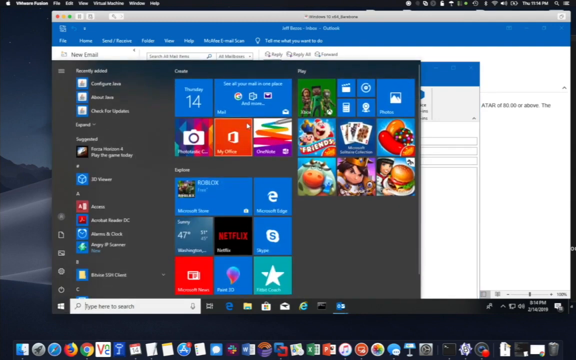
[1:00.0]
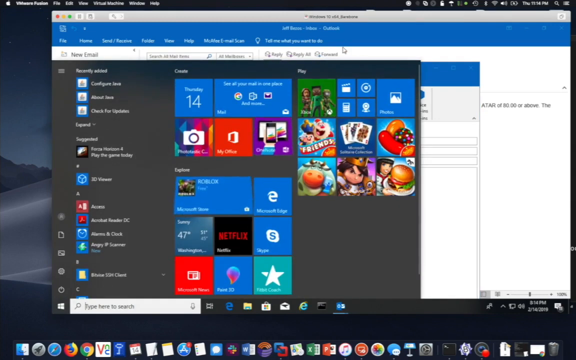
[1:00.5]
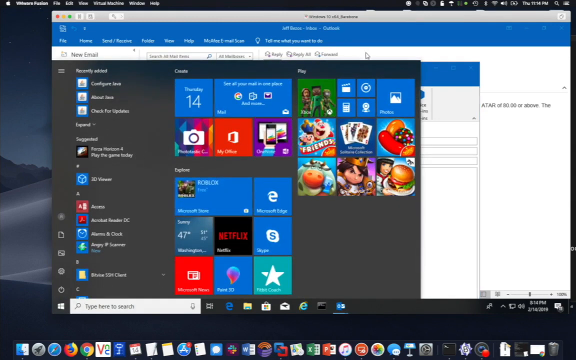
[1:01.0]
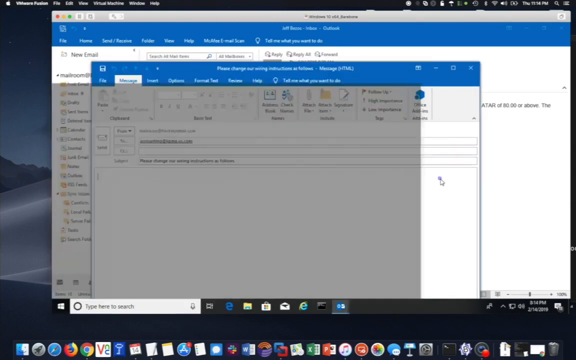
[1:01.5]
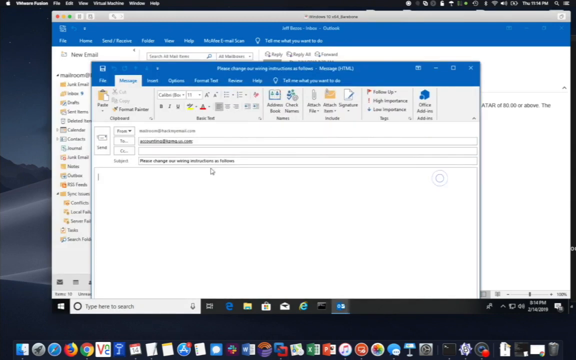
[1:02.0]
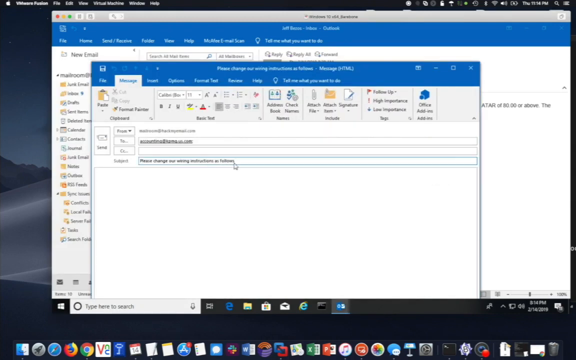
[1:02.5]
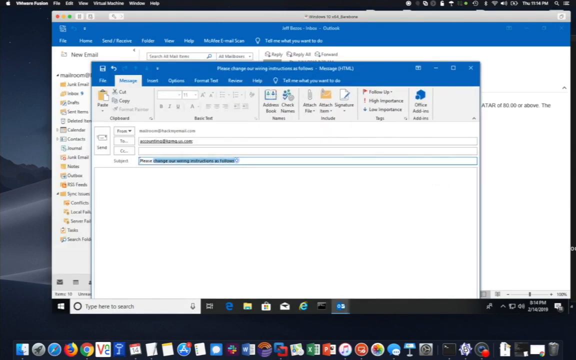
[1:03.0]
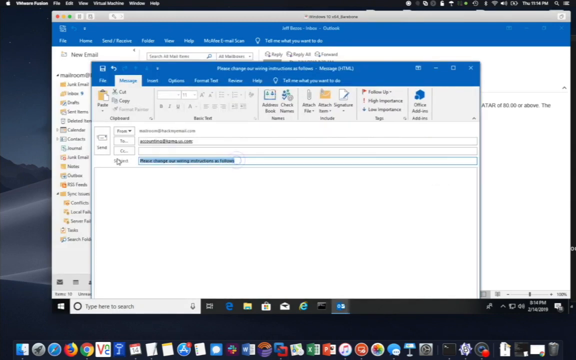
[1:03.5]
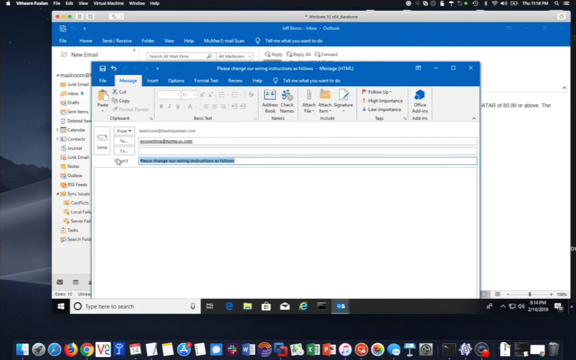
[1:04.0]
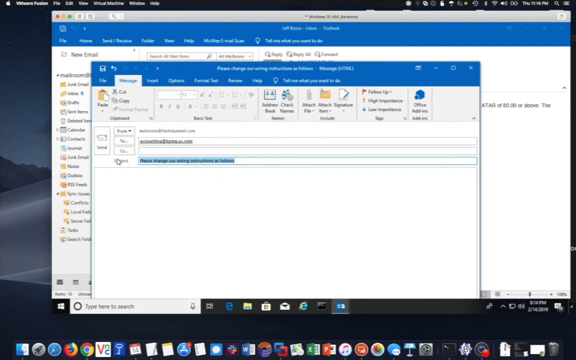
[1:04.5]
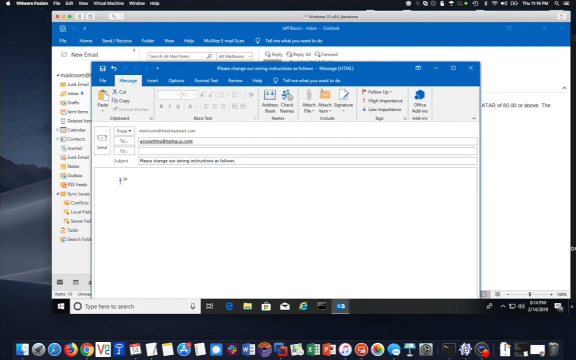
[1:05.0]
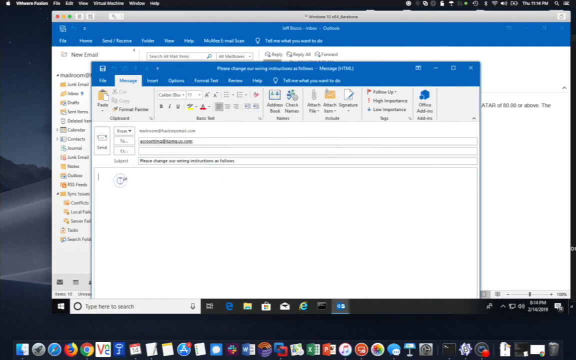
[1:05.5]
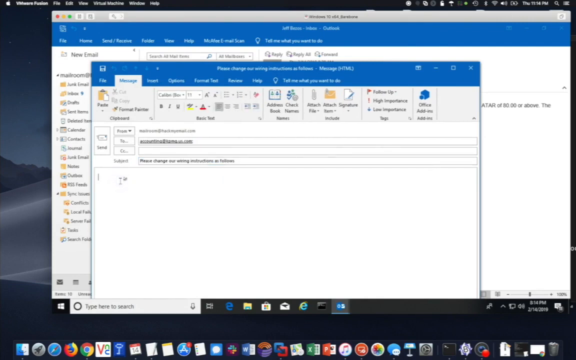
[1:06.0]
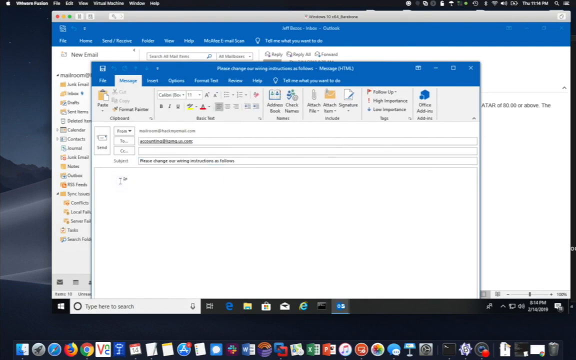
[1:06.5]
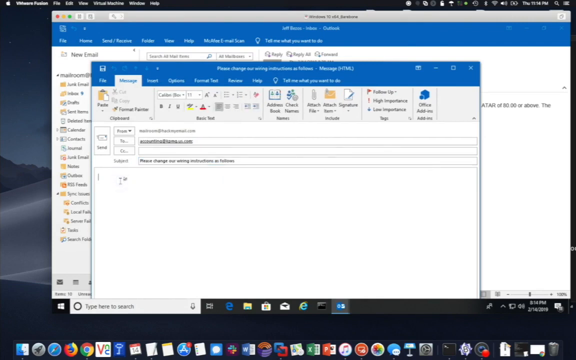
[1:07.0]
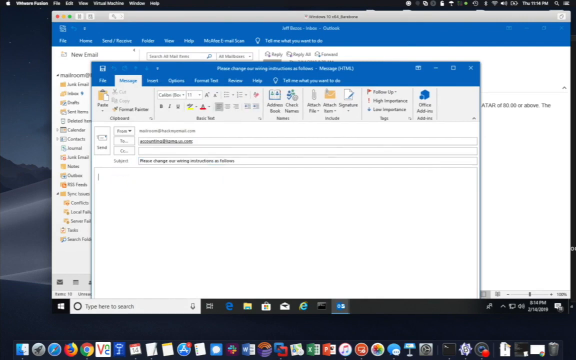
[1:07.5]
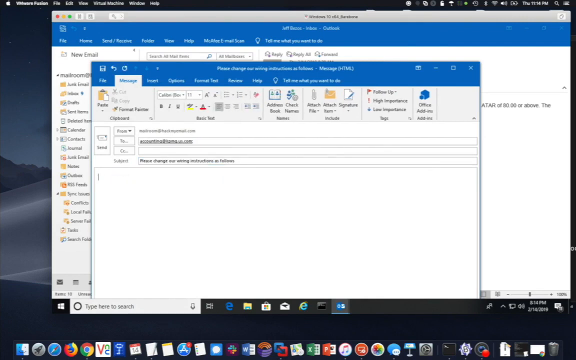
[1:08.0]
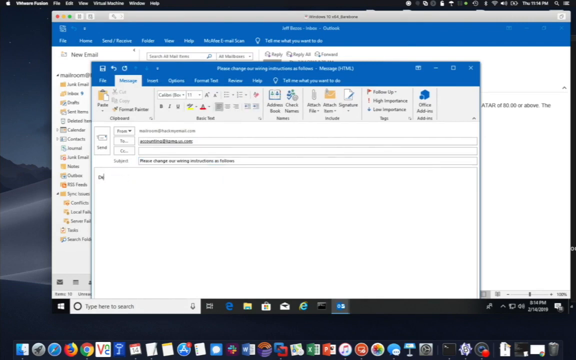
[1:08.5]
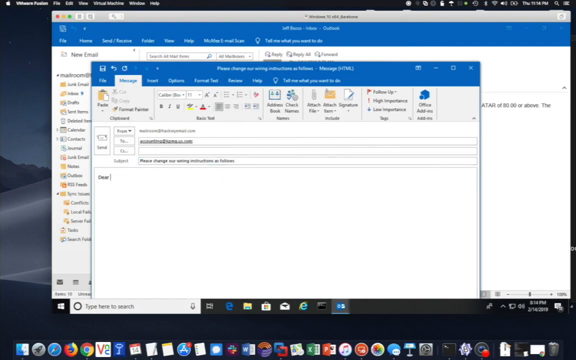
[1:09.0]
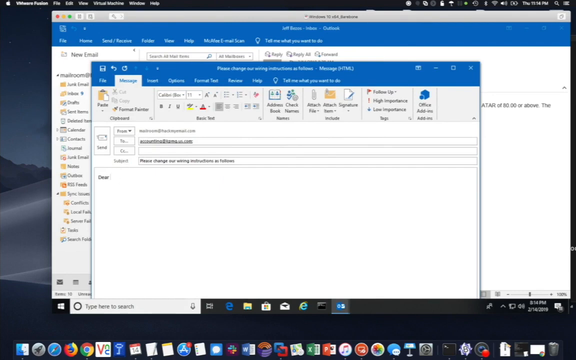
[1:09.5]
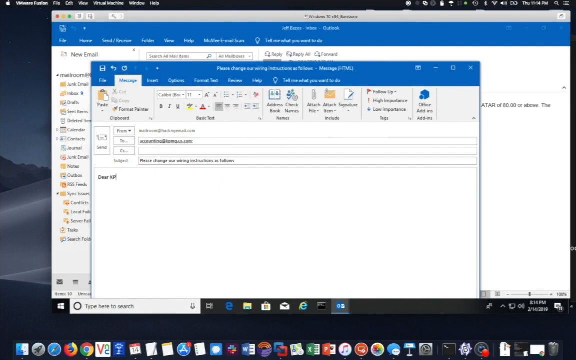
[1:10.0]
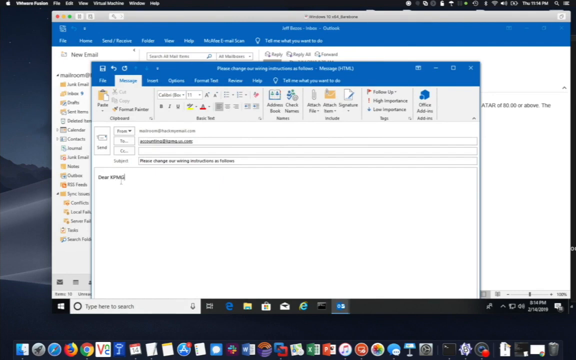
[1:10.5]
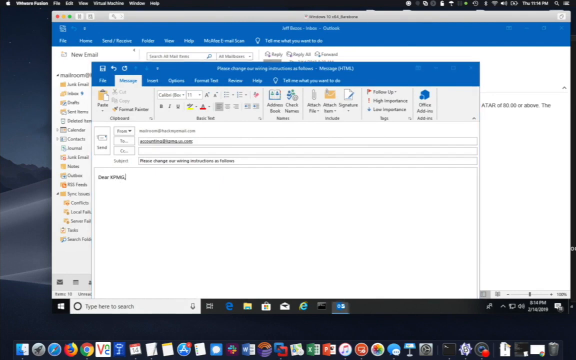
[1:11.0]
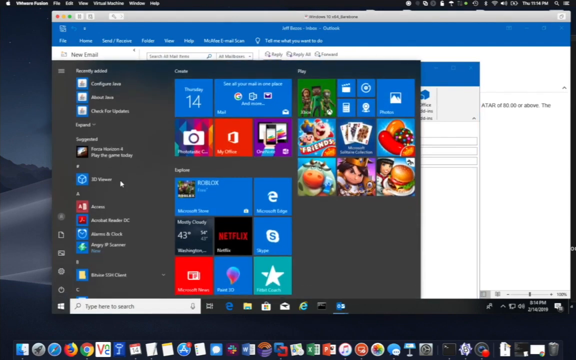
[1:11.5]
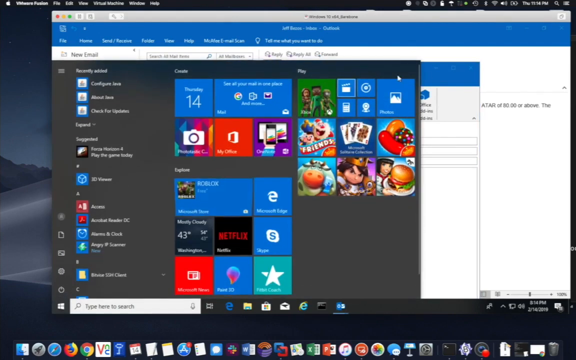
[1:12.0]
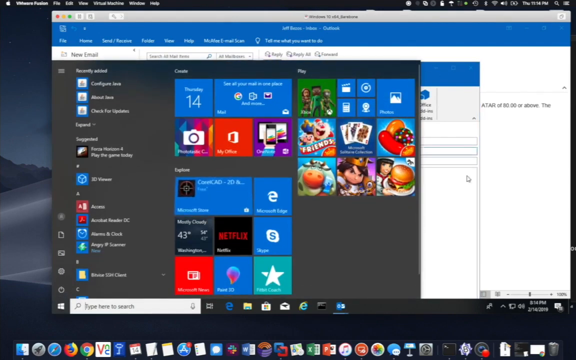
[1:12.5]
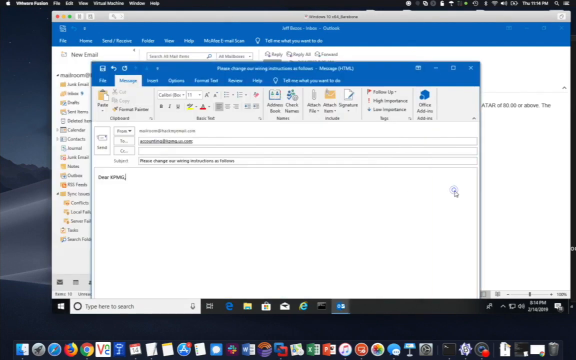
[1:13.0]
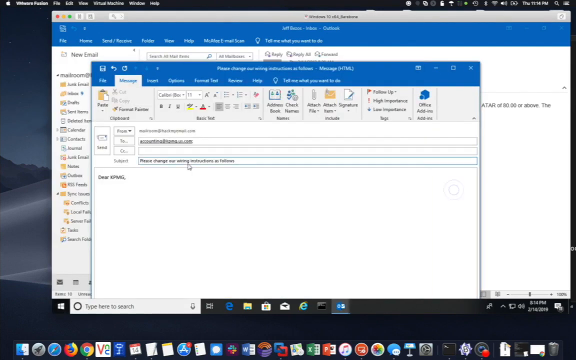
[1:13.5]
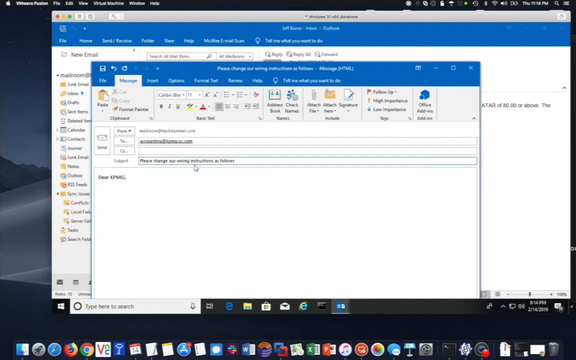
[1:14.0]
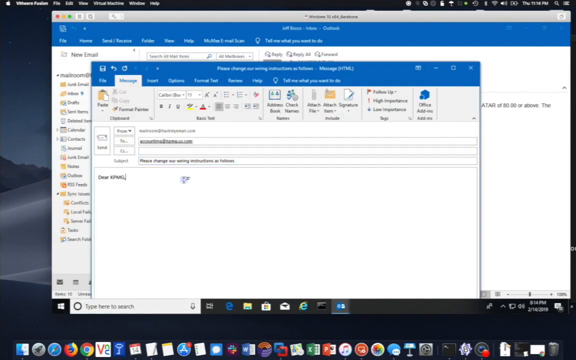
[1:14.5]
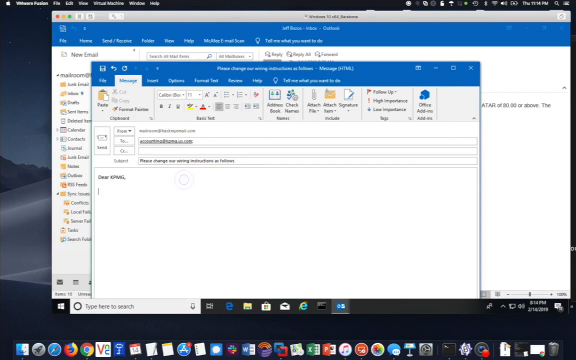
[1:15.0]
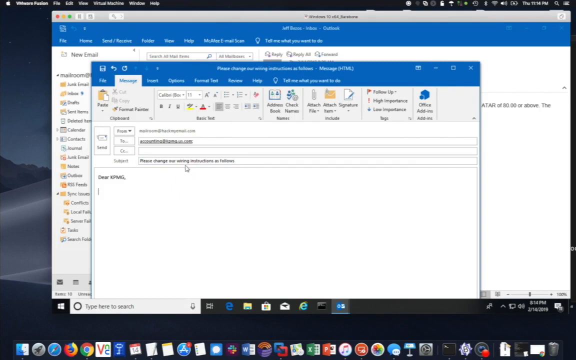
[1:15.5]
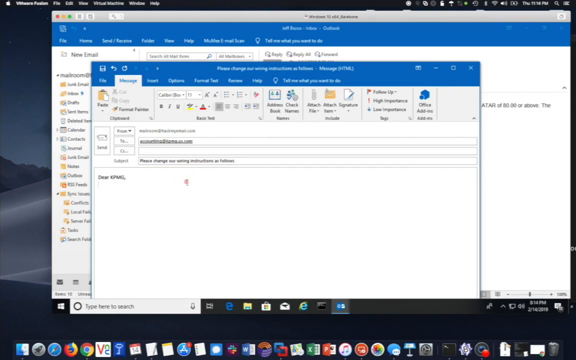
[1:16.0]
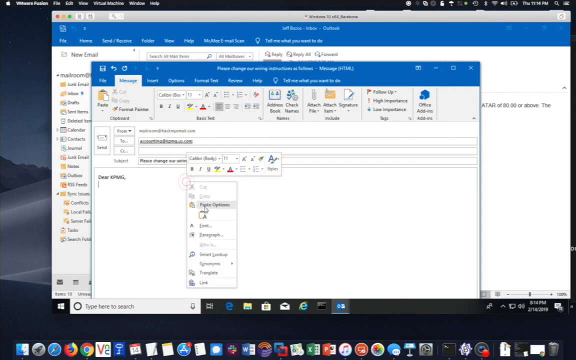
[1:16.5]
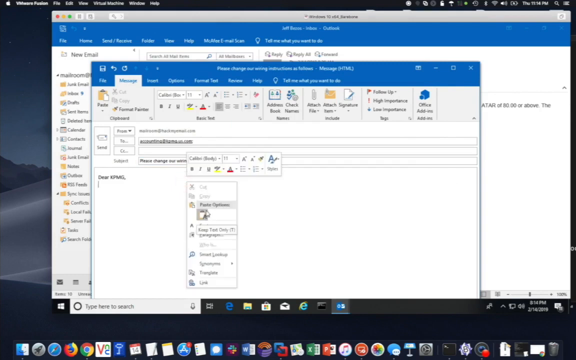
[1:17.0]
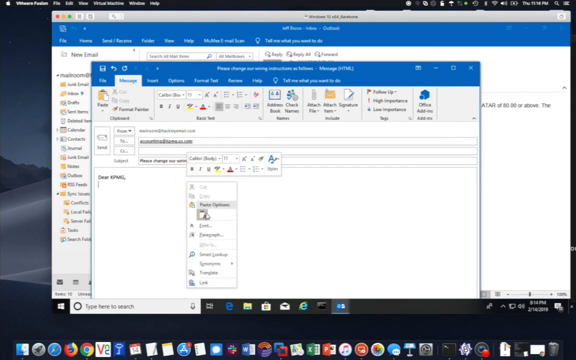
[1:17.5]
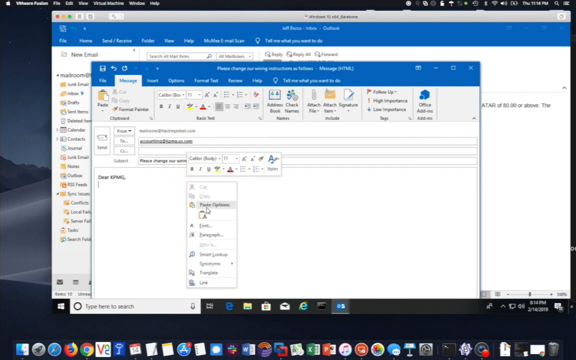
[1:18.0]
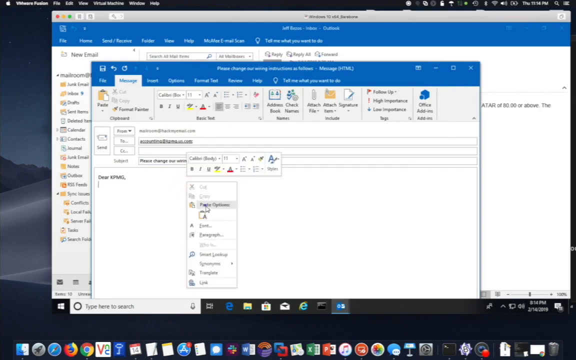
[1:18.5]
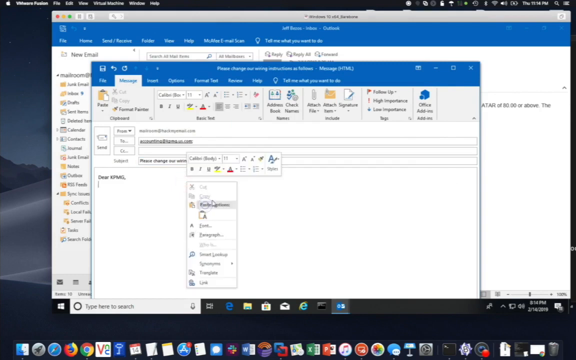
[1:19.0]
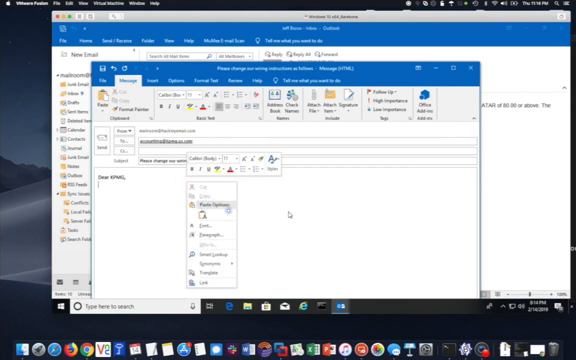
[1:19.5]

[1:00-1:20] Multiple windows are open on a computer screen: an email page in the back, and then the message page opens. The home screen appears briefly with the cursor moving around it, then disappears and the screen returns to the email message screen. Someone highlights the subject in the subject box, and the cursor moves down to the message box, where they begin typing. The view then switches back to the home screen, where one of the blocks looks highlighted and begins to rotate slightly. It returns to the message screen, where someone clicks what looks like the Tools button, and choices for font size and color appear. Someone clicks what looks like a clipboard icon, which also appears on the drop-down menu.